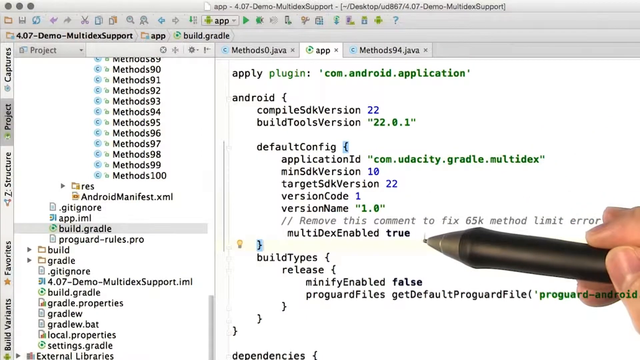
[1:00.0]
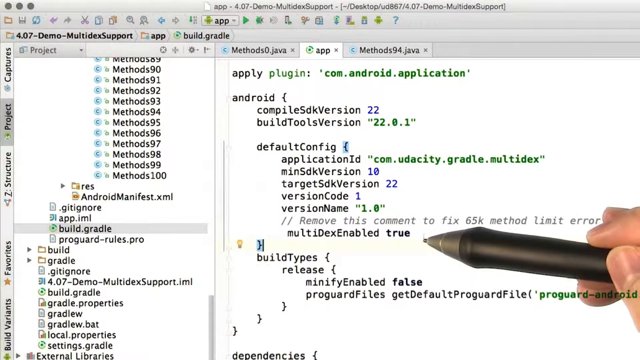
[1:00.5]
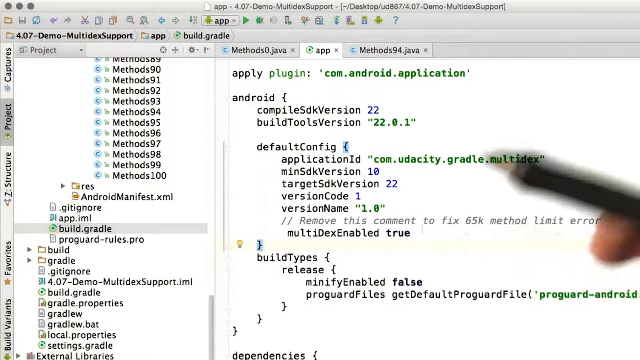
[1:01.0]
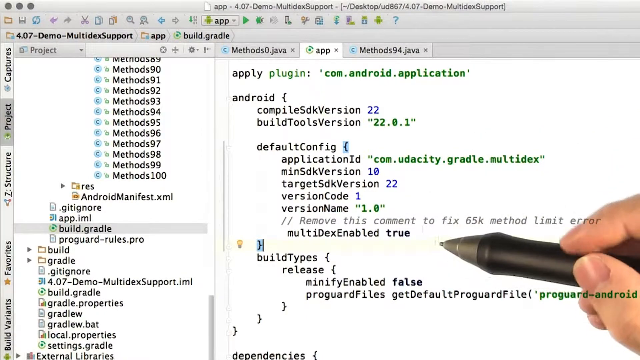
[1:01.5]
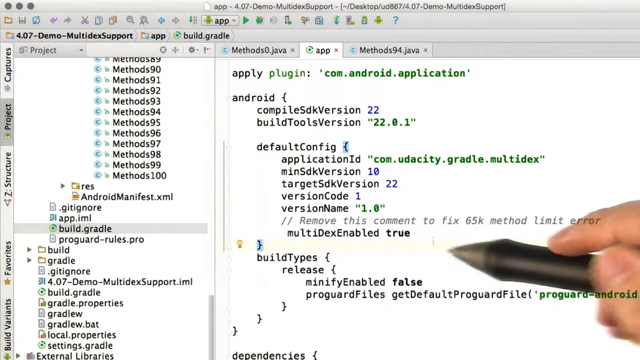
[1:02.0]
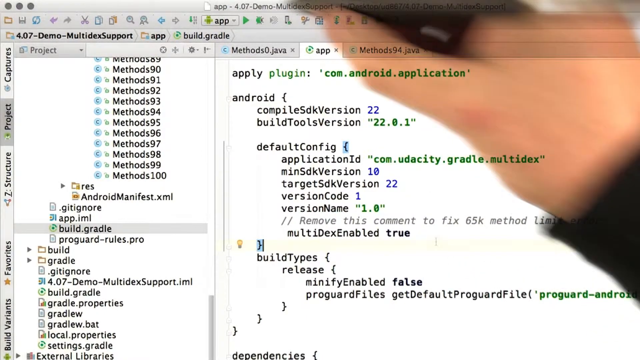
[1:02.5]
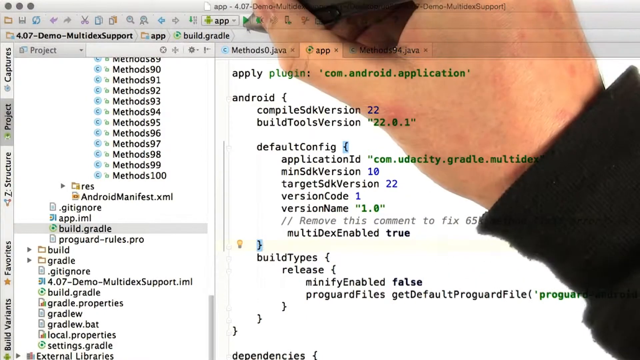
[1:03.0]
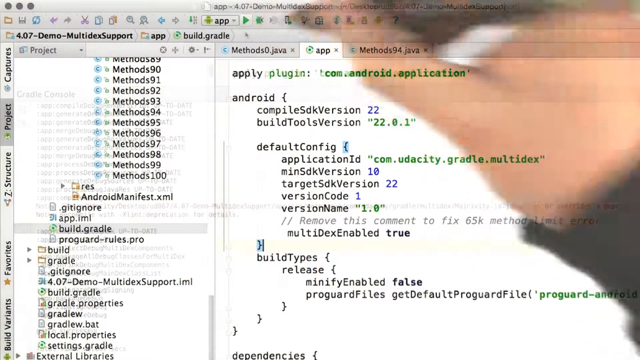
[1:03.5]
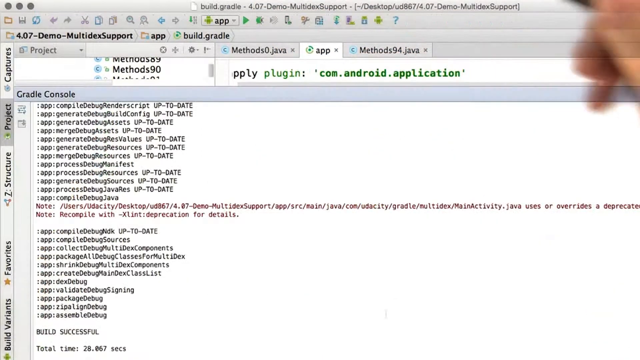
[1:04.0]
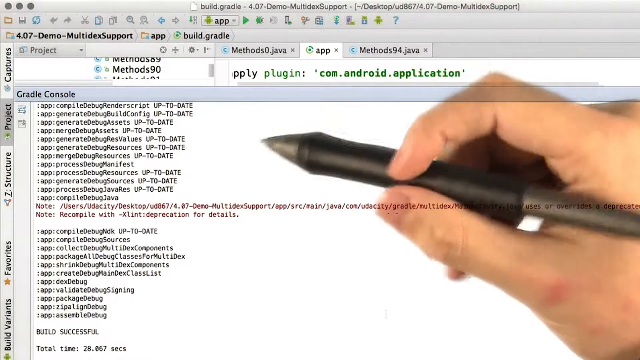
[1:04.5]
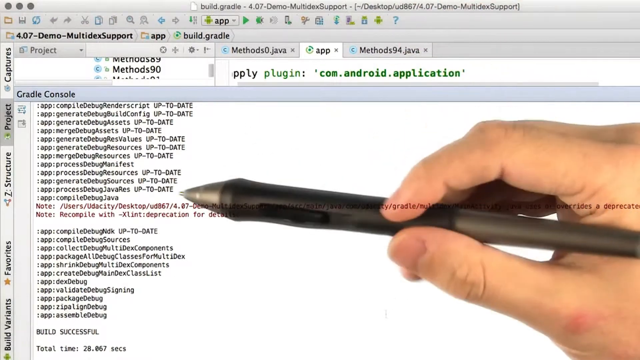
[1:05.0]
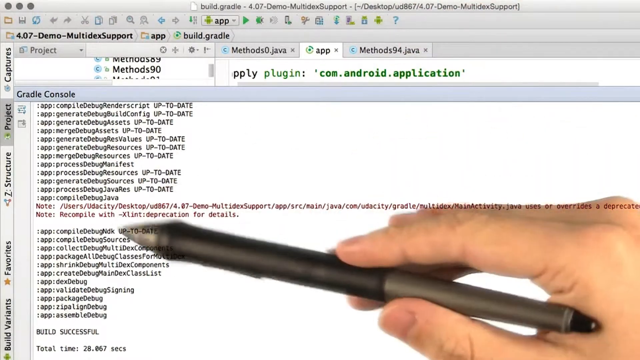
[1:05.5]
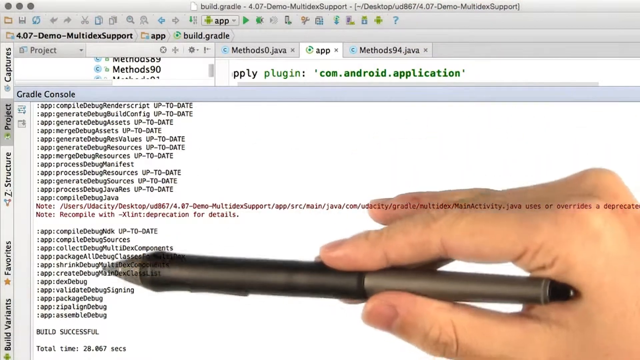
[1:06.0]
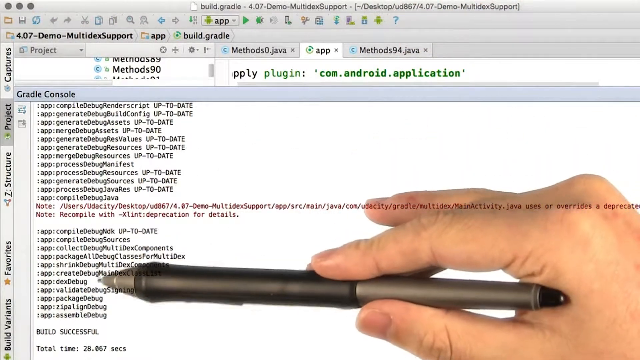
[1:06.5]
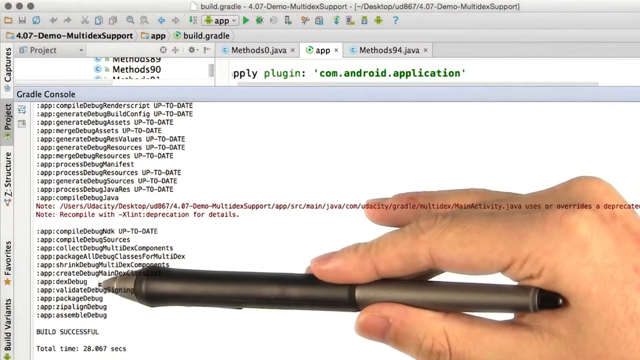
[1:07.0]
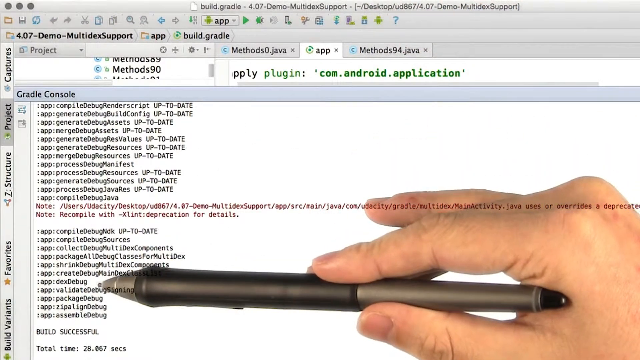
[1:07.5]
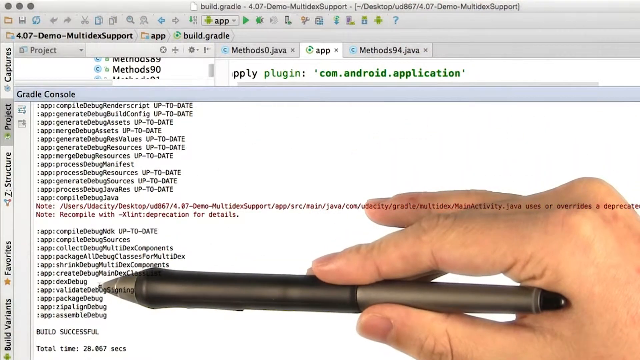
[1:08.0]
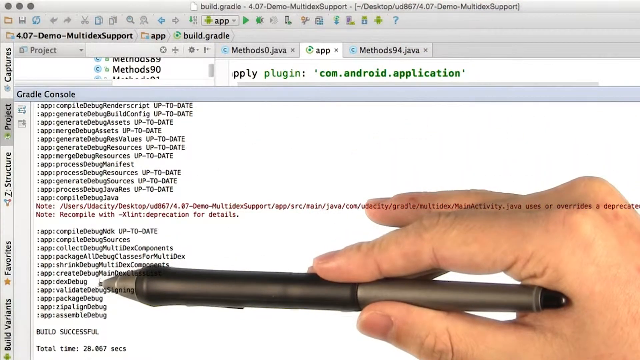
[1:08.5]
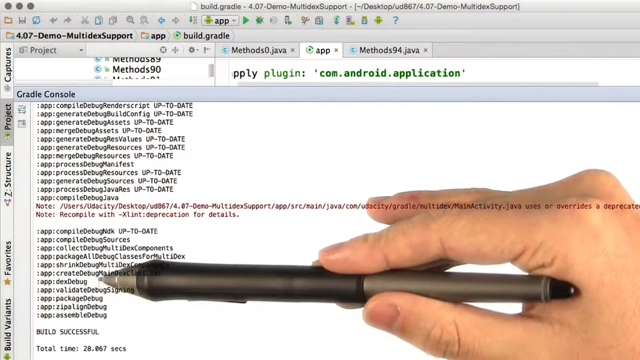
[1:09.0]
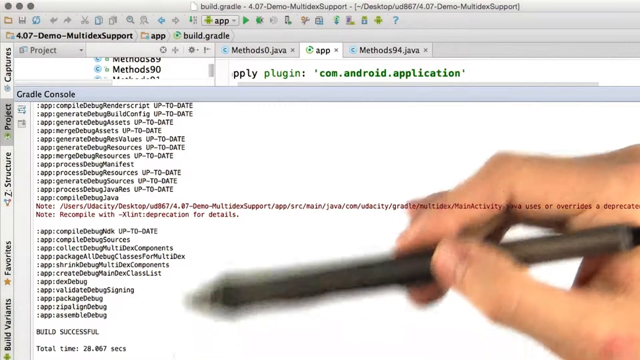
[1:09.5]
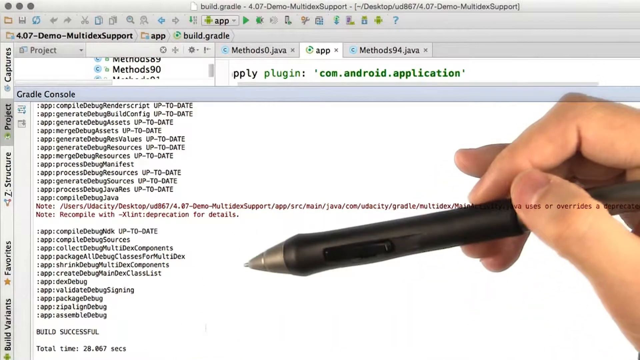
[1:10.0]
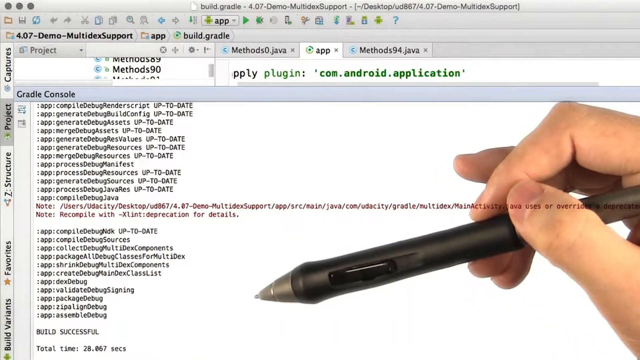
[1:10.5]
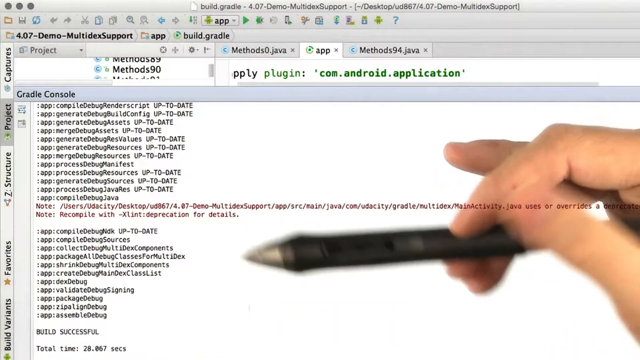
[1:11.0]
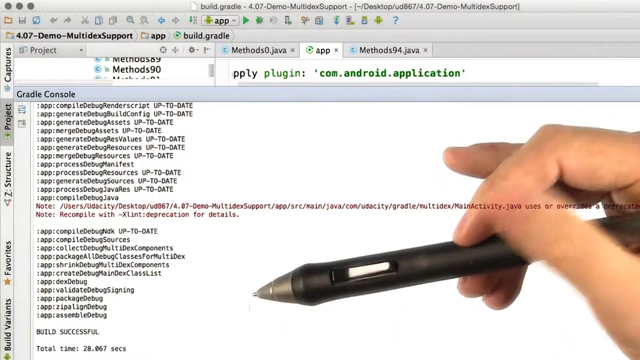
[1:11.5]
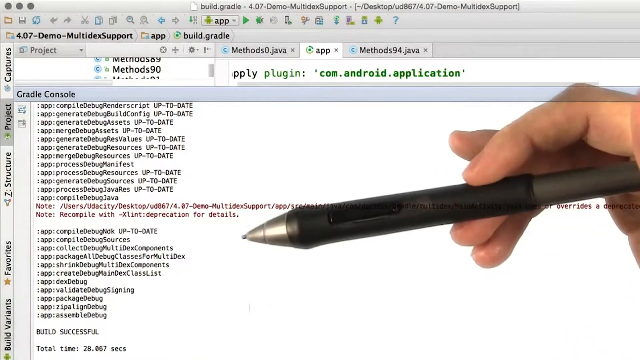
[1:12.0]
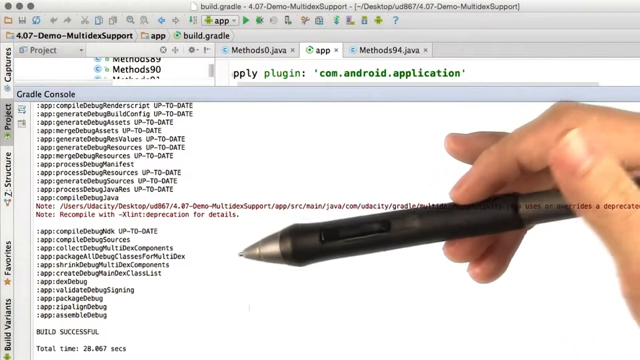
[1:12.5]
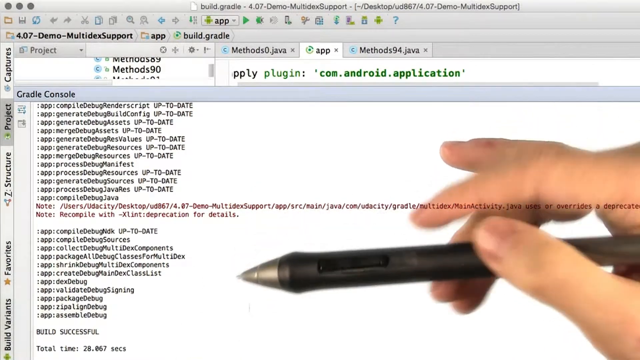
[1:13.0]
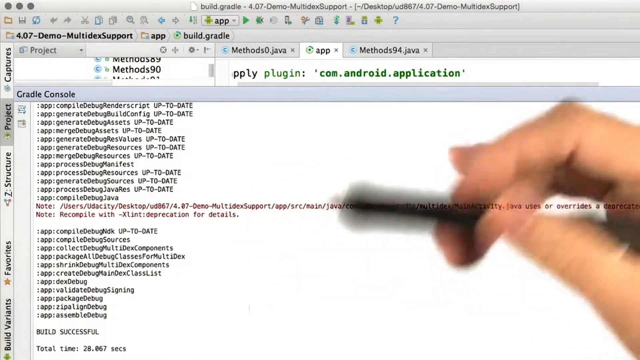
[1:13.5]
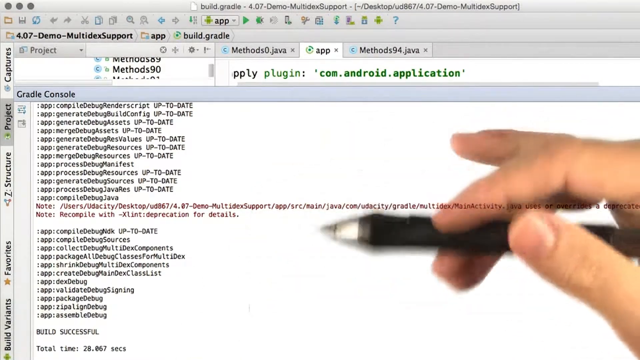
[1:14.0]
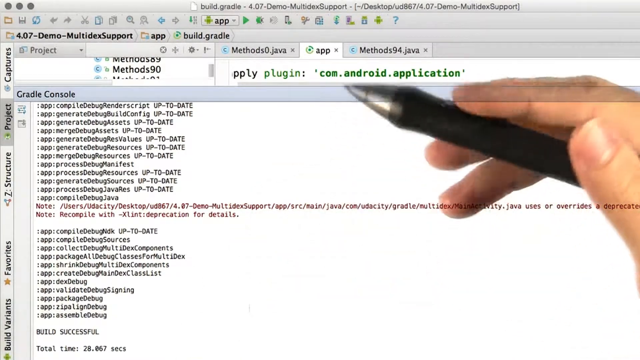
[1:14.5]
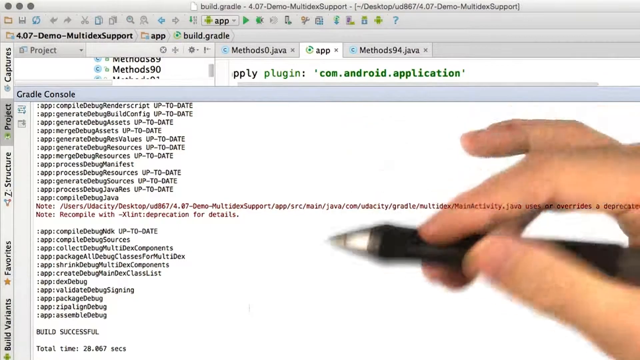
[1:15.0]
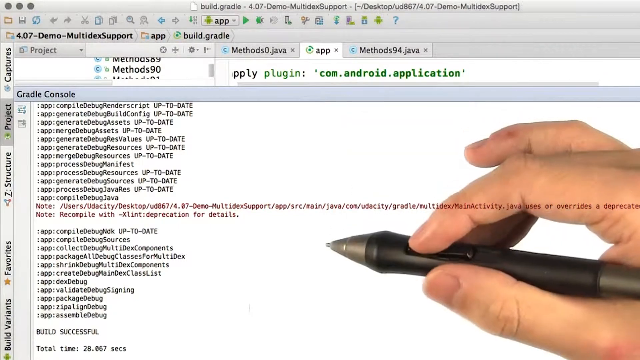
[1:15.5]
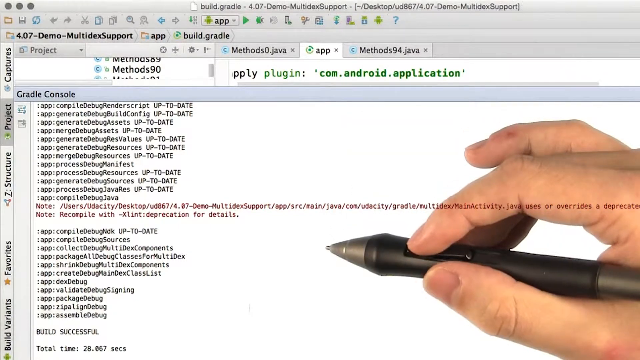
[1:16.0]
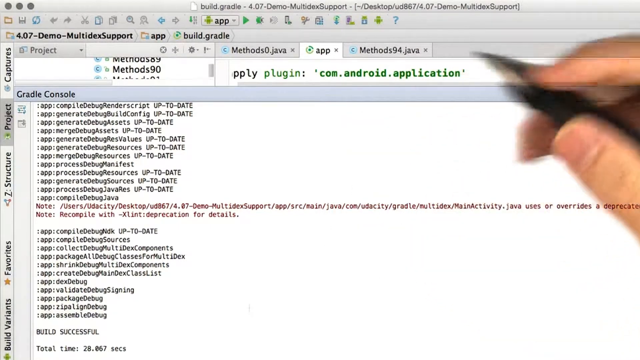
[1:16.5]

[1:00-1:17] More details are displayed, and items the teacher selected earlier are now clearly shown. Fewer of the other methods appear; instead there are plenty of public void methods, up to the 700s of them, while the Java methods number only in the hundreds. He continues teaching about information written in red, but the video quality is low and the red words cannot be read; only the words in black and gold are clearly visible. The video is displayed on a computer with a white background, and other edits are written in green and blue as the teacher continues teaching about using the Java methods.